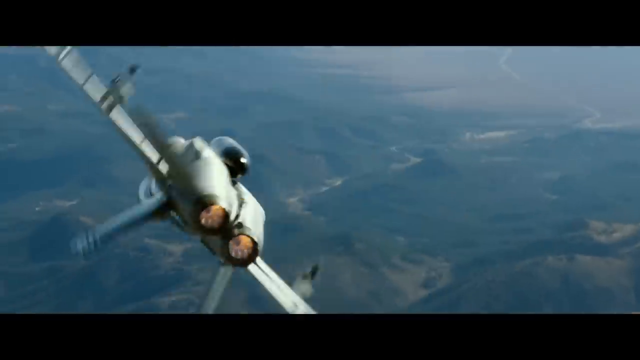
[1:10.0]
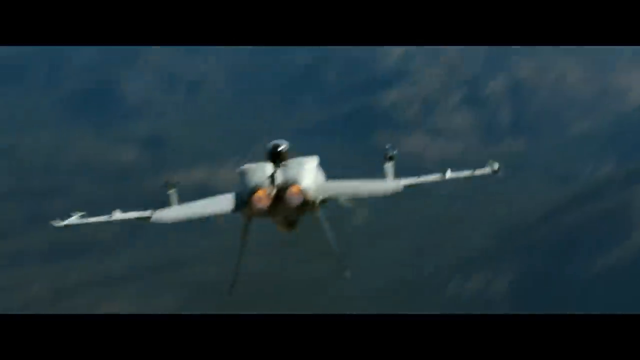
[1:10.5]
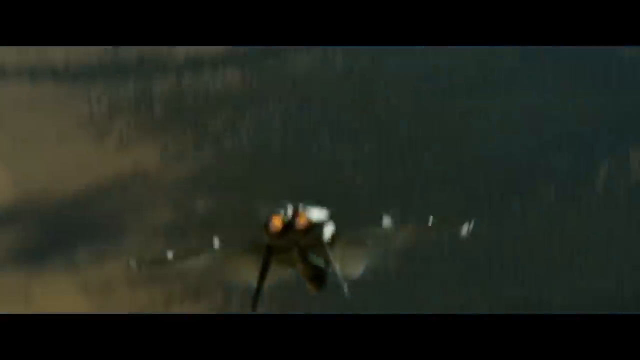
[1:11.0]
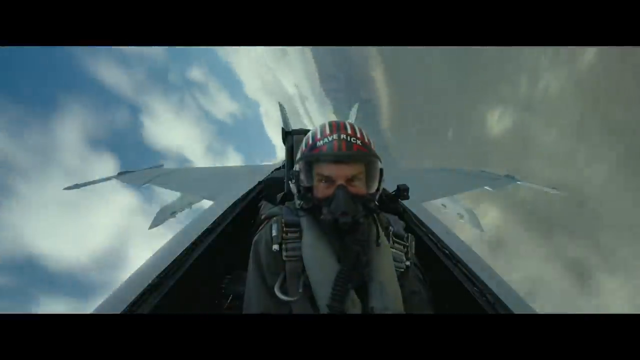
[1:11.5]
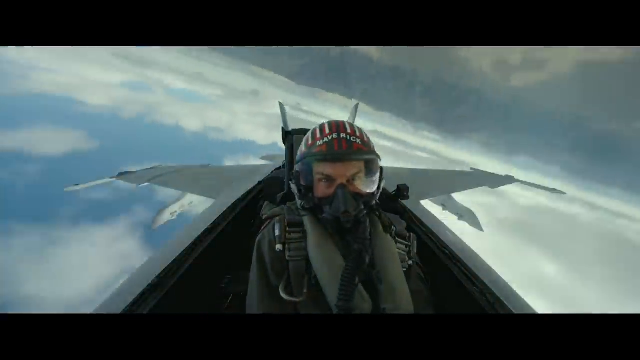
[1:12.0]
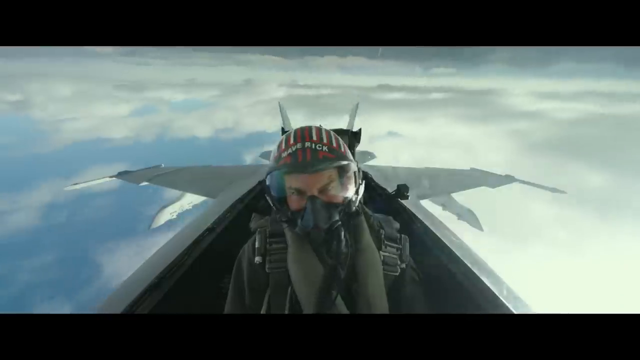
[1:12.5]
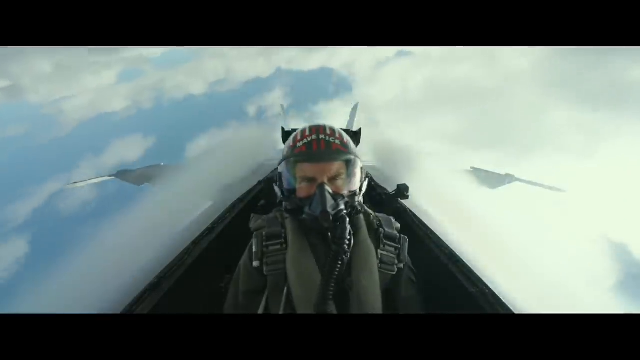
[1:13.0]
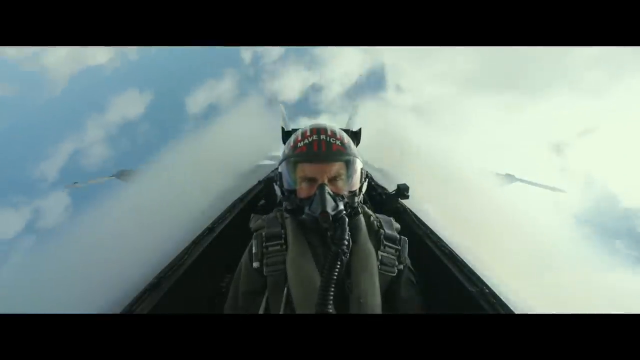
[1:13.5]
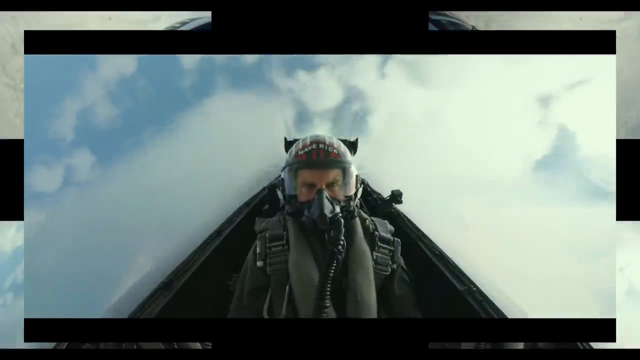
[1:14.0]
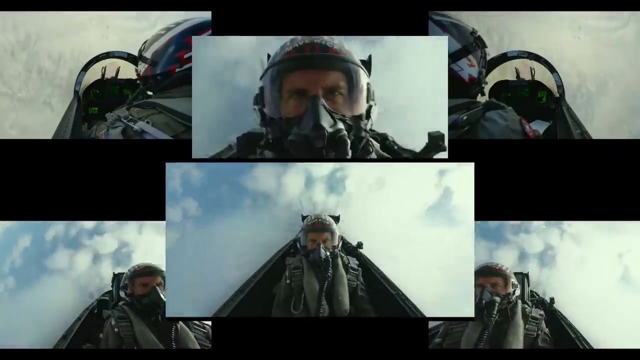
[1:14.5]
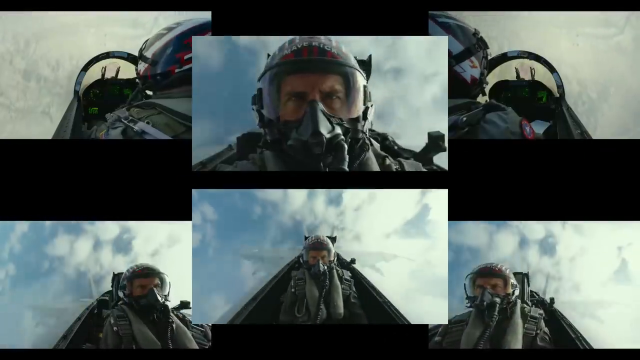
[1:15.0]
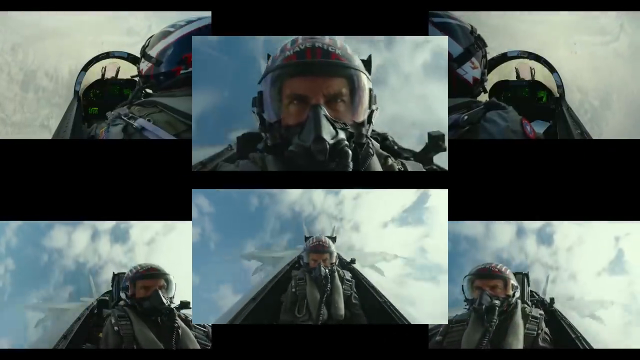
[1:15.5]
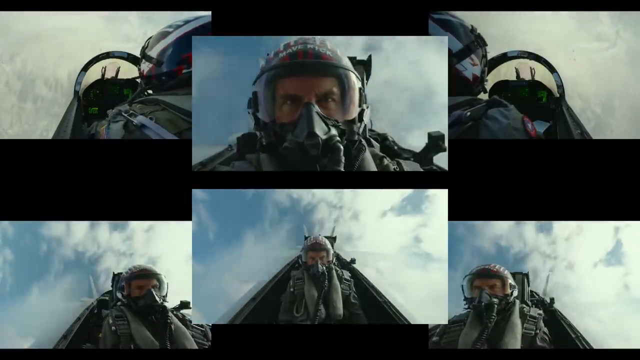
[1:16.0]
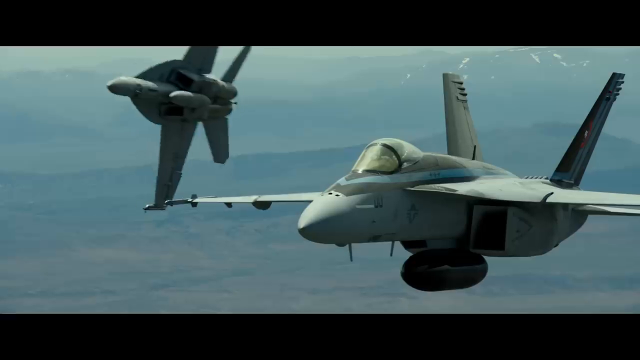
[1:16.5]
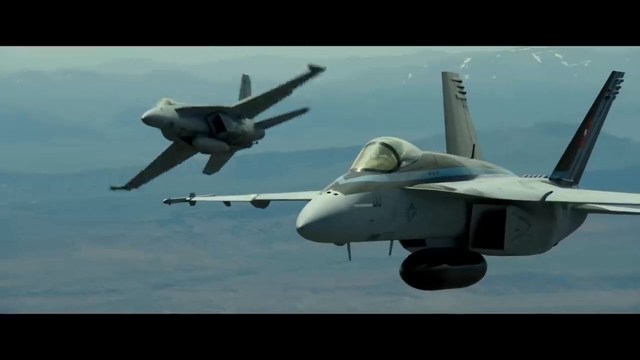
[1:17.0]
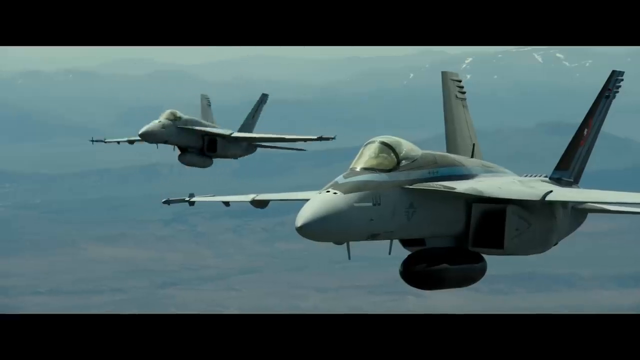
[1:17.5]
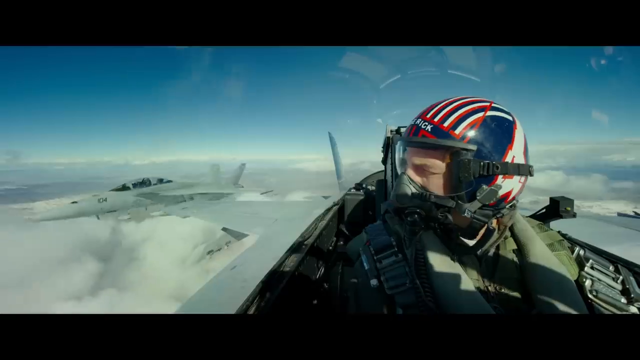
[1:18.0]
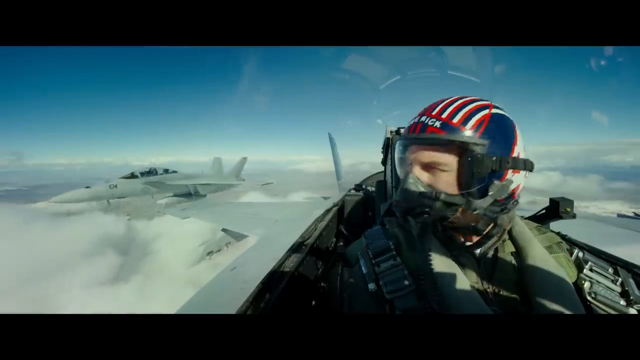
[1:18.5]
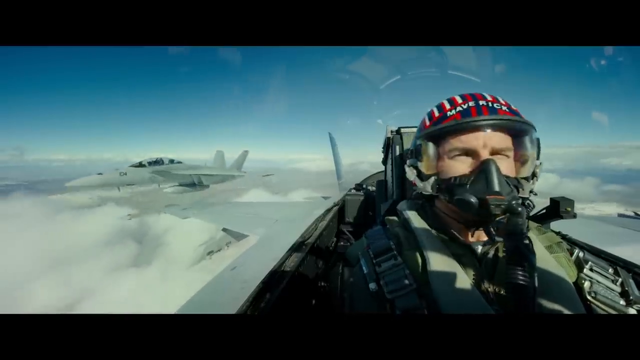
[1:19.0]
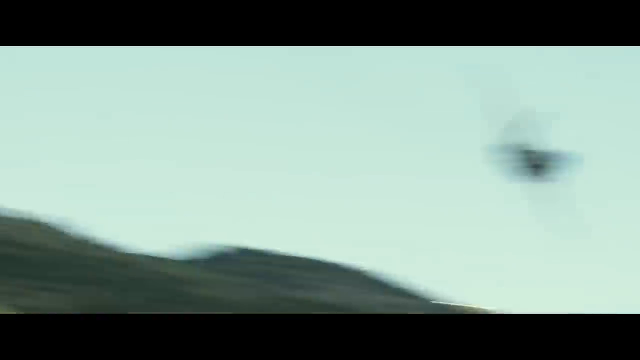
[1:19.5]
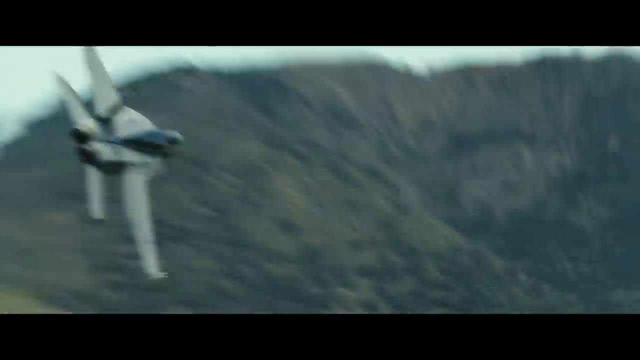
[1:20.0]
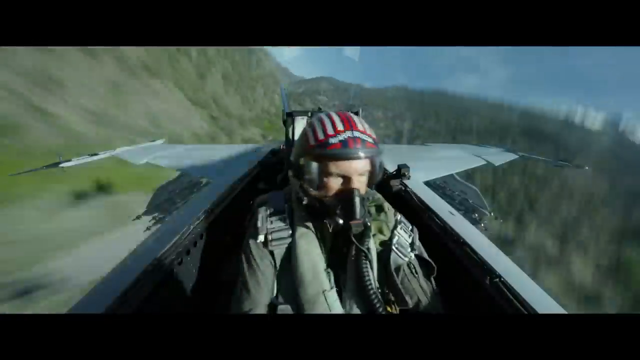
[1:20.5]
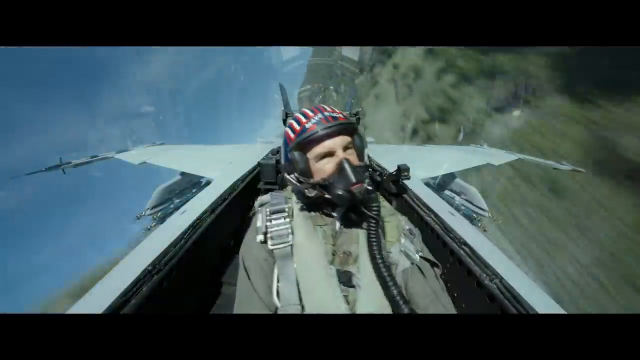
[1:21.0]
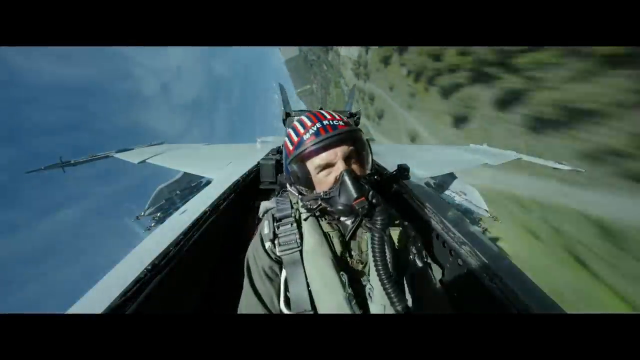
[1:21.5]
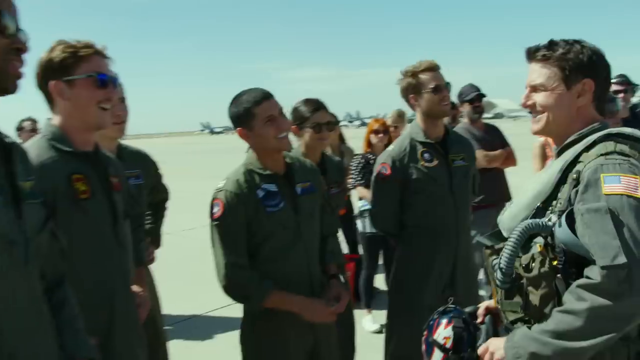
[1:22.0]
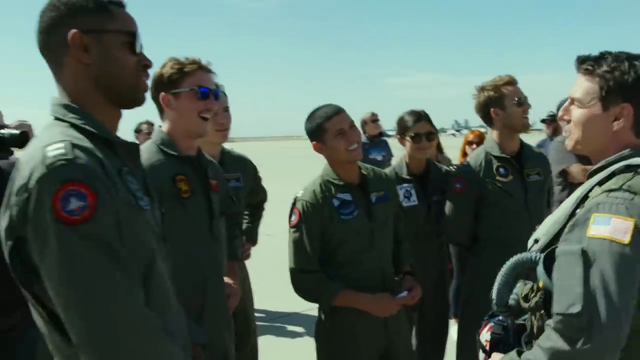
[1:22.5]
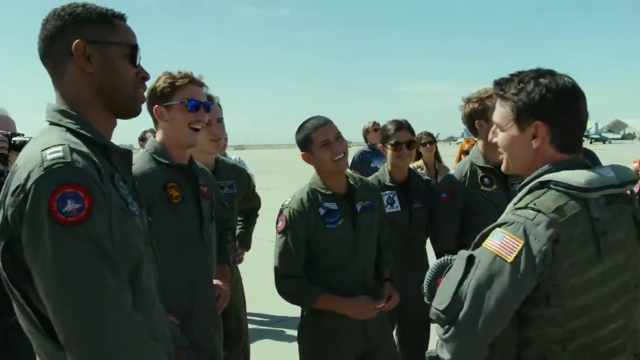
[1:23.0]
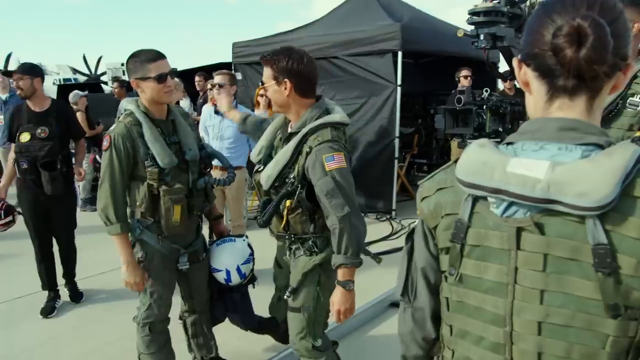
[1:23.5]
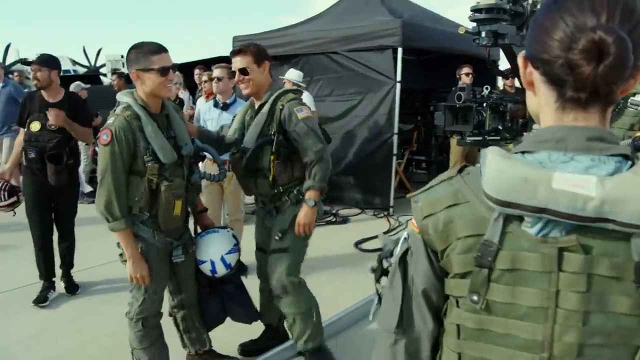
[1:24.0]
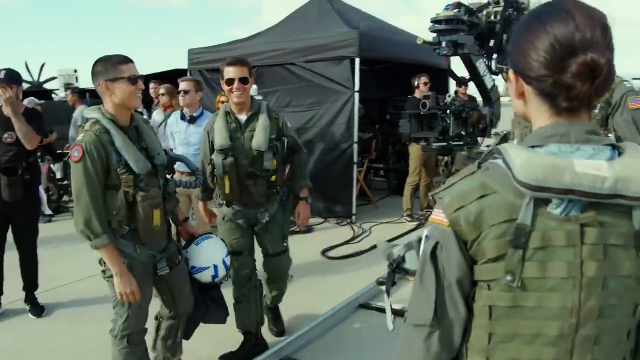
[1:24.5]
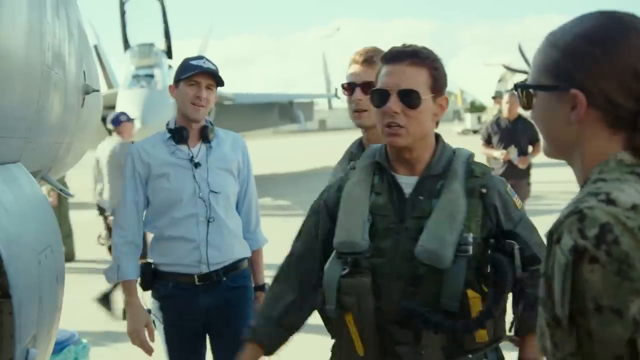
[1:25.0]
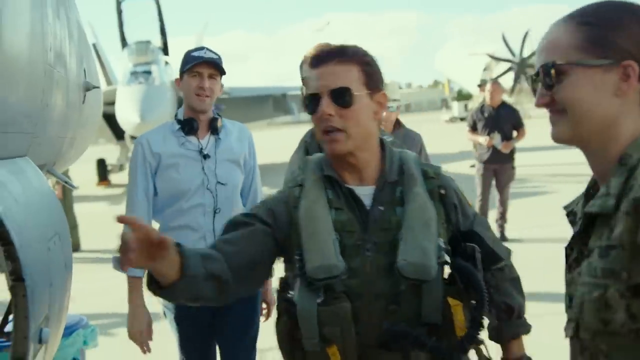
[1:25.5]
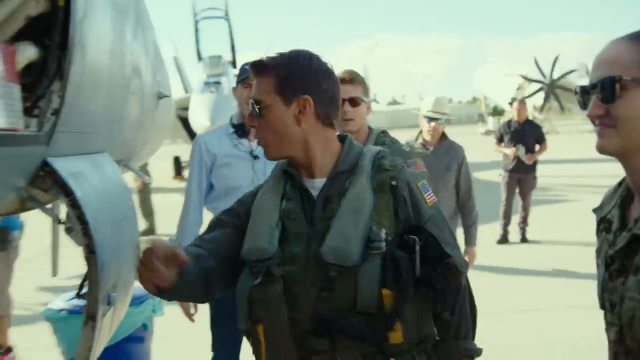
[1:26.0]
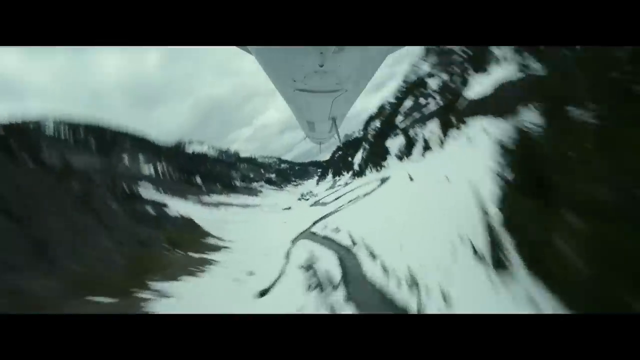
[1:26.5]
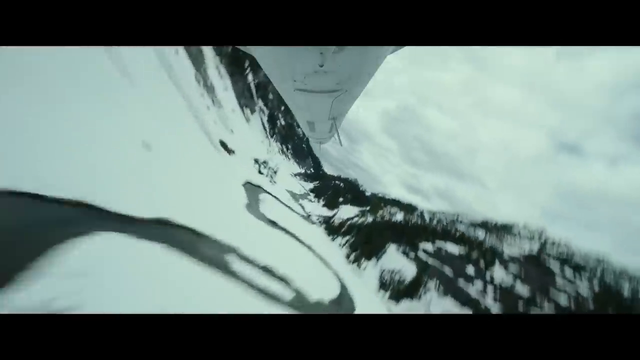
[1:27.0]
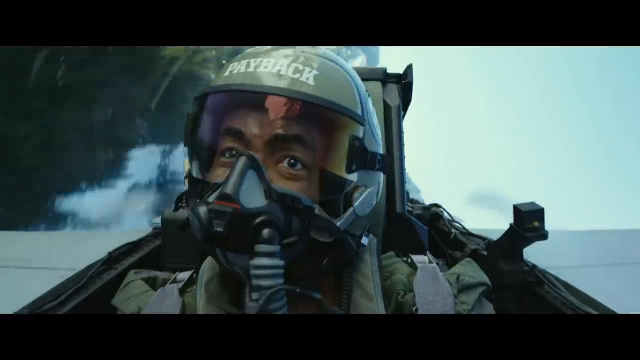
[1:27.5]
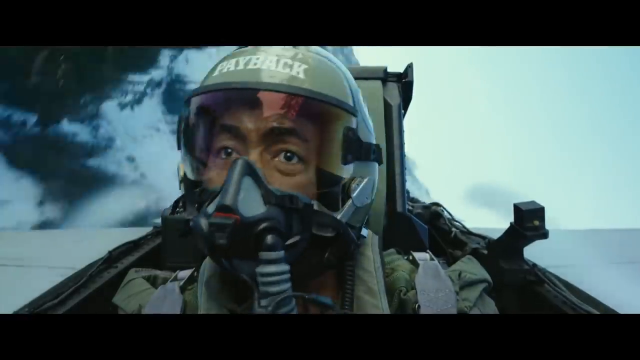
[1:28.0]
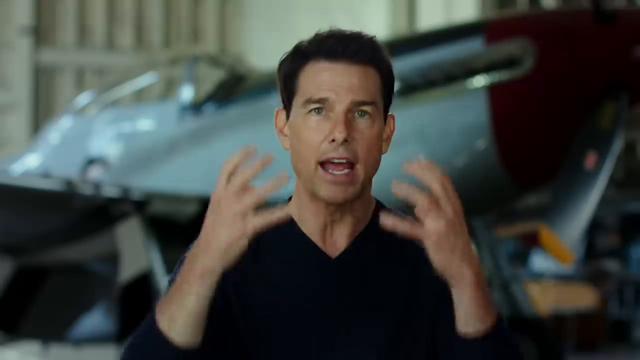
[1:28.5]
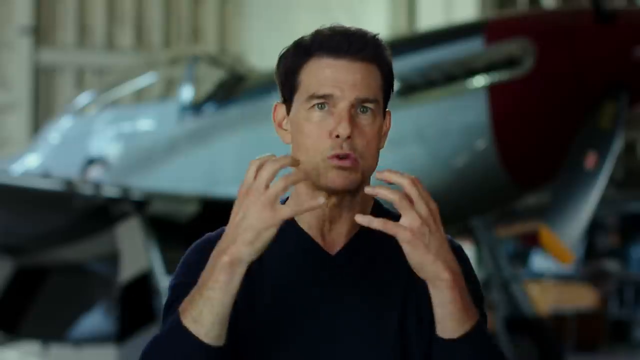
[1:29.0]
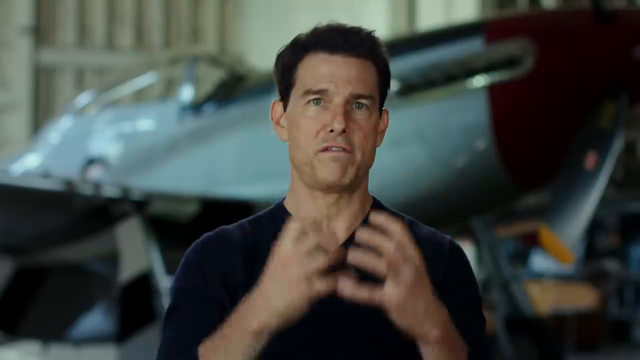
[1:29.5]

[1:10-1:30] People on the ground watch people in the air competing against each other in what looks like a race. The people are of different ages and look like American army soldiers, some wearing black clothes and some wearing green camouflage. There are many people, and the scenes change quickly: some people are in an office, where men appear to explain what is going on, and some are on the ground taking pictures and videos. Joseph and Jerry appear. Maverick is apparently the winner of the race. Visible text includes "Payback", "Phonics" and "Jade". A man wearing yellow directs people which way to go.